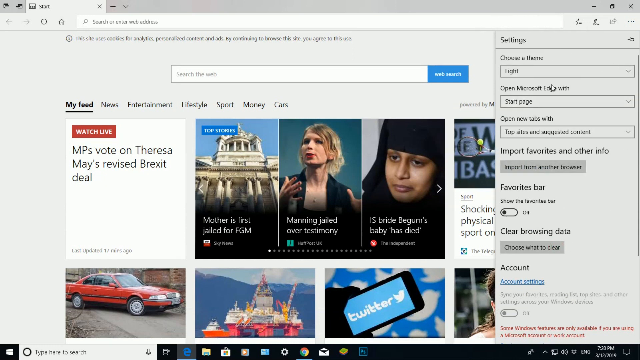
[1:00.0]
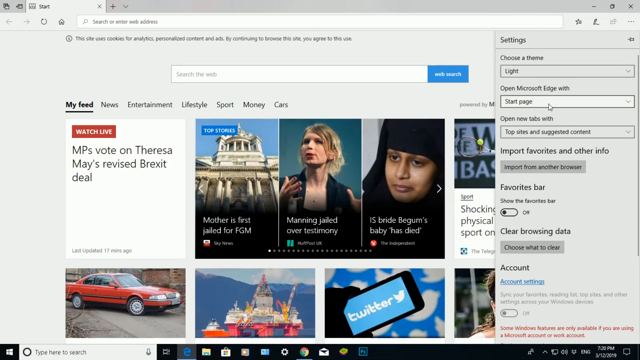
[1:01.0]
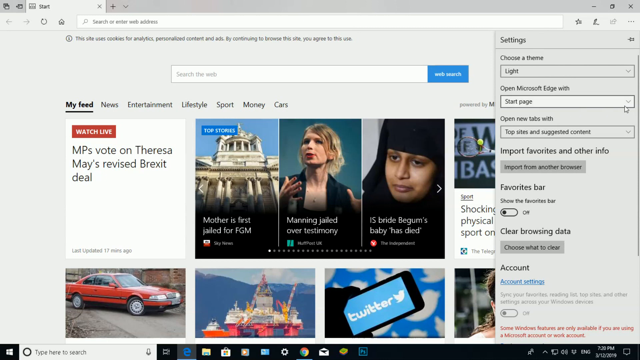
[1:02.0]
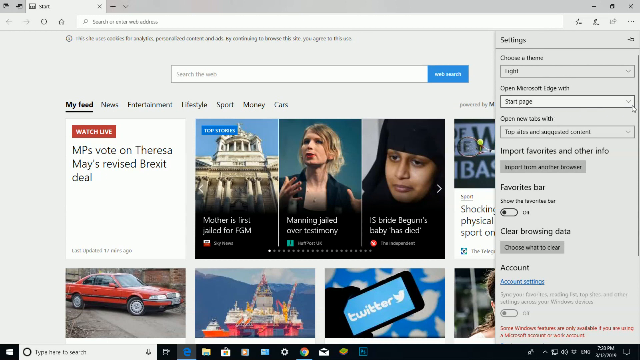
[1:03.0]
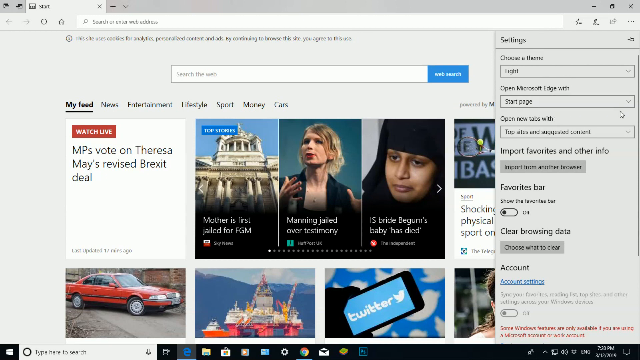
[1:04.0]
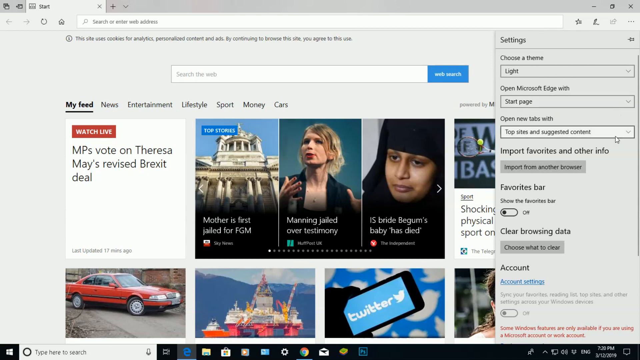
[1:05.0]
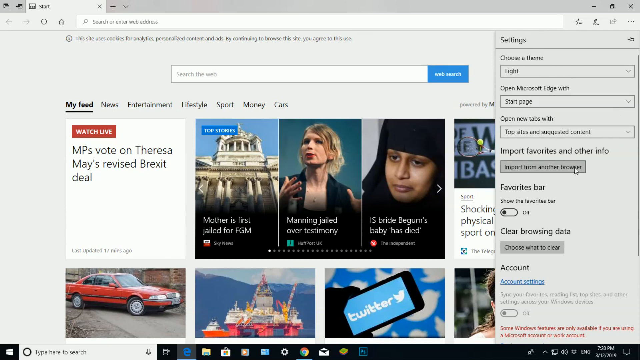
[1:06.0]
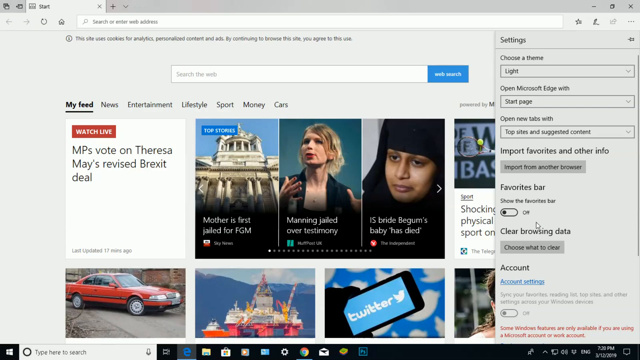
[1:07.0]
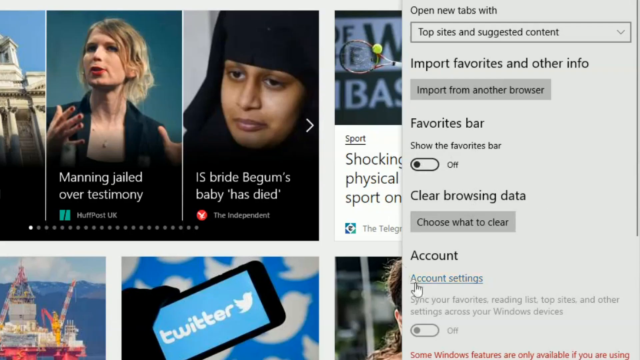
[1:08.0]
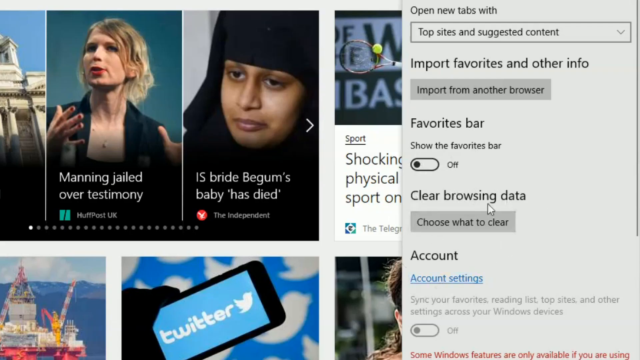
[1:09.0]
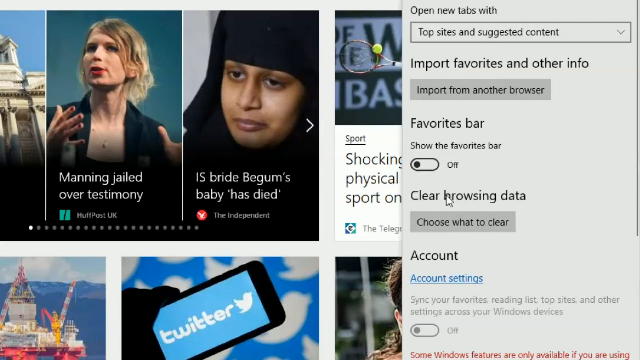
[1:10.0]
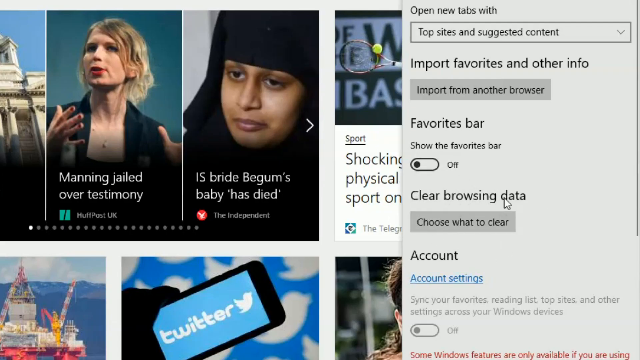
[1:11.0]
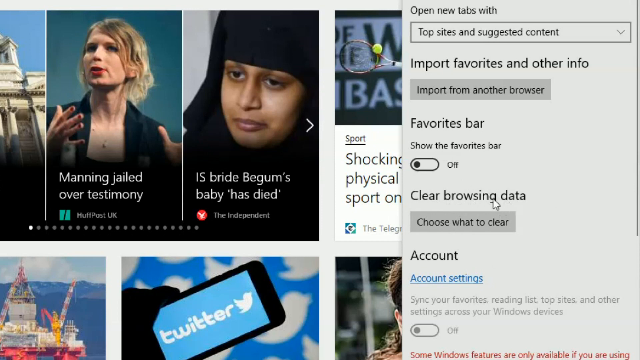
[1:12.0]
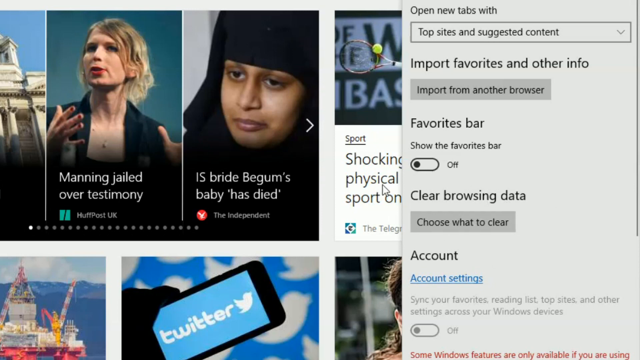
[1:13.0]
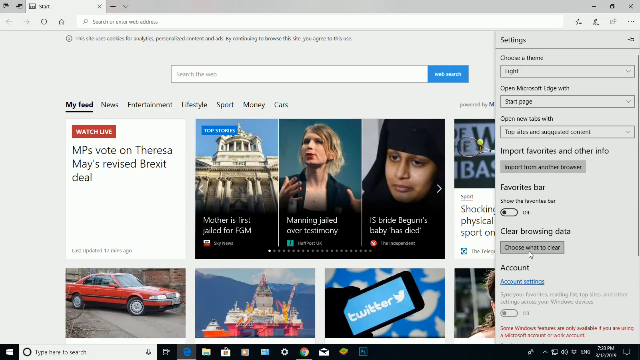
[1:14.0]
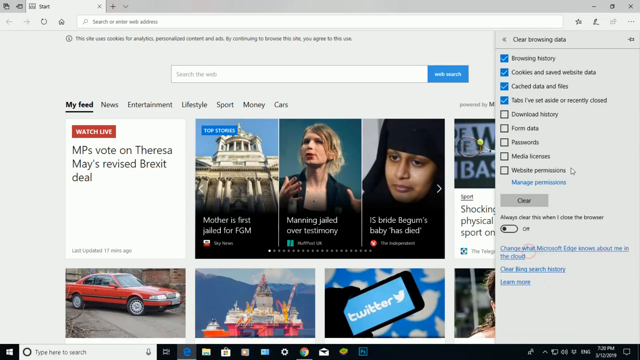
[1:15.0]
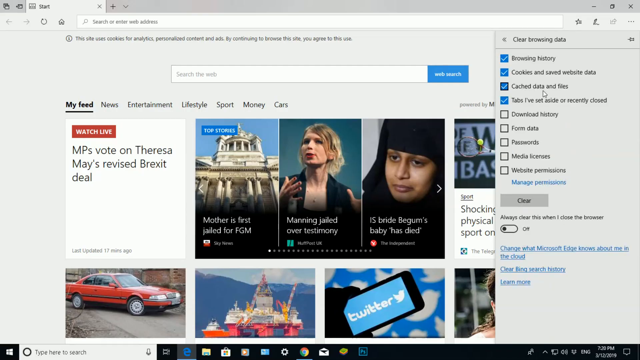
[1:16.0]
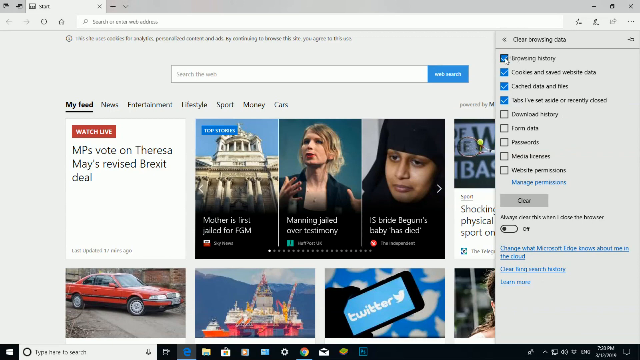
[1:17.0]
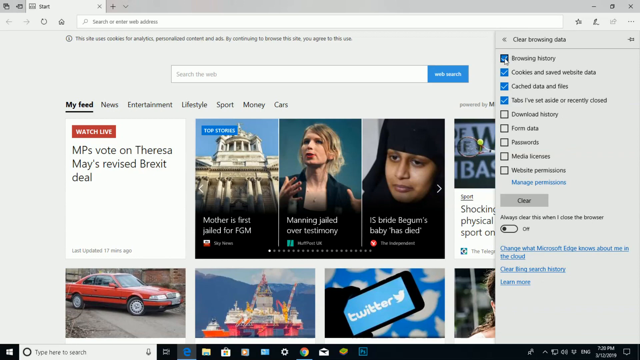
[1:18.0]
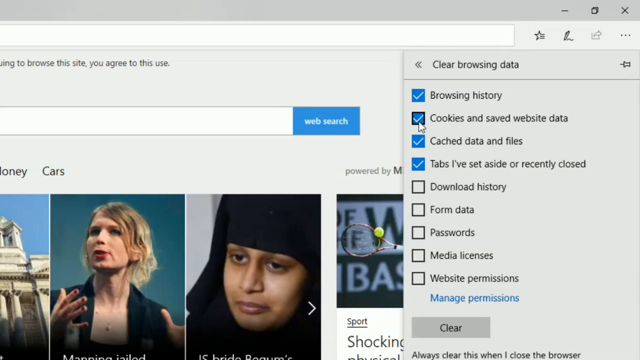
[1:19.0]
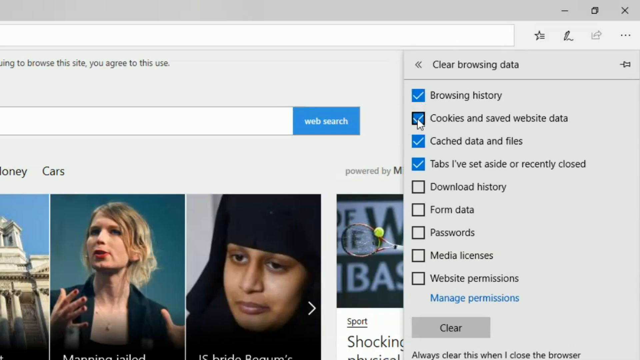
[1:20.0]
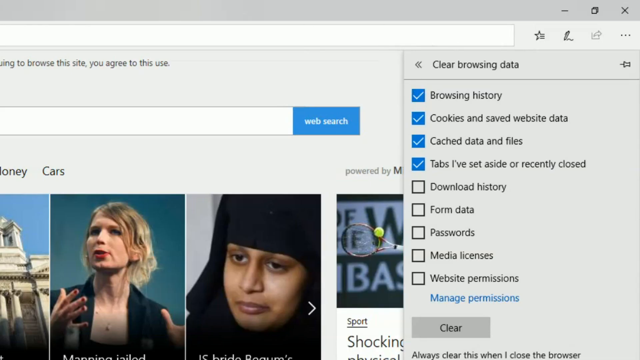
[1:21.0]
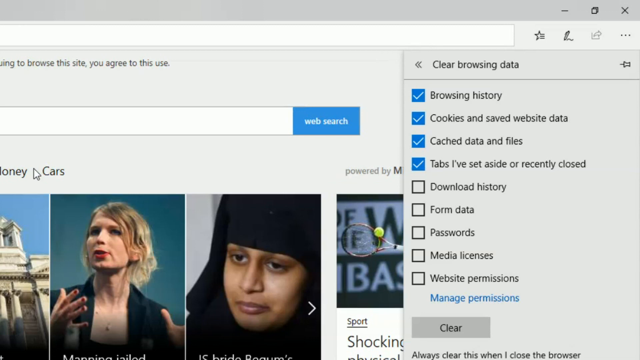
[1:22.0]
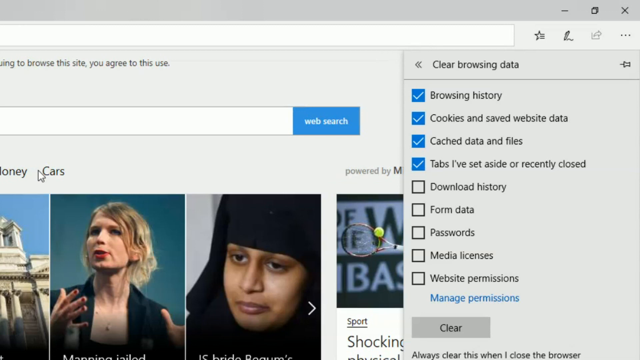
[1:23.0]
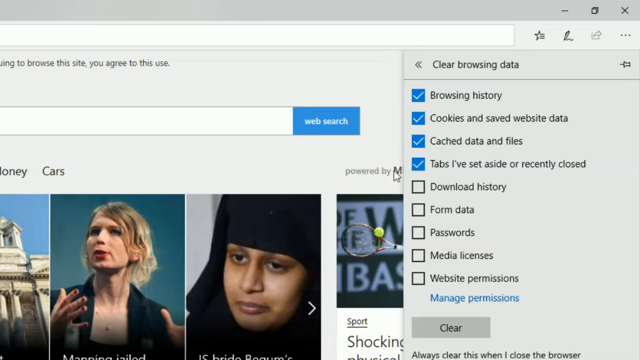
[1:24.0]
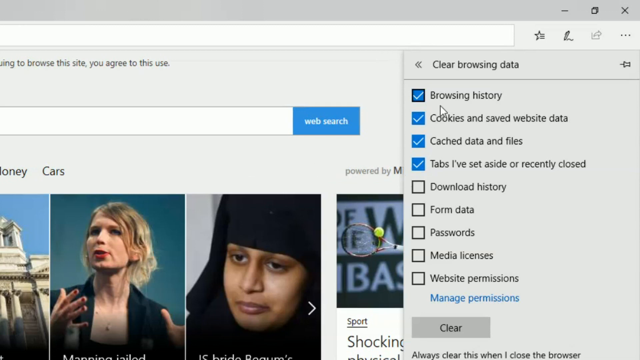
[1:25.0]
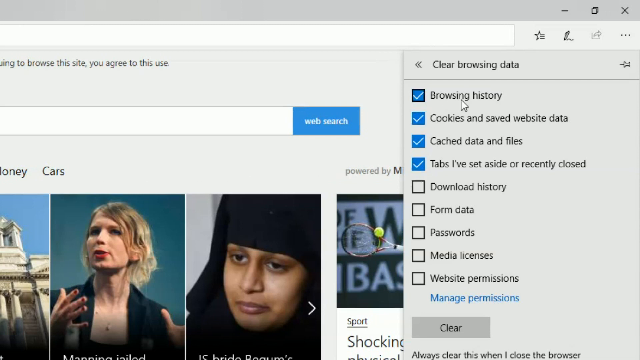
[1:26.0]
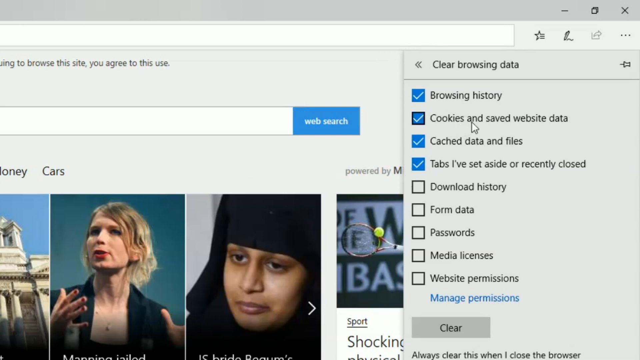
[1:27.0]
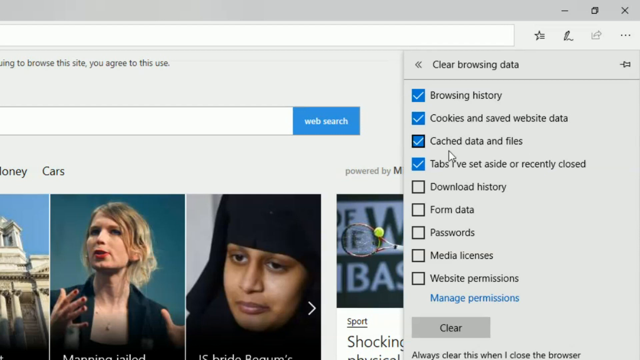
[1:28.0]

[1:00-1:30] A news website is open, showing multiple news thumbnails and text, on a Mac computer. With the settings menu already open, the user moves the mouse over a section called "Open Microsoft Edge With", slowly moves the pointer over a list of options, and ends up circling around a section called "Clear Browsing Data". He clicks a button called "Choose What to Clear", which opens a list of options with checkboxes. Some are already checked, including browsing history, cookies and saved website data, and cached data and files, while other options are unchecked. He hovers the mouse over a few of them but does not click any.